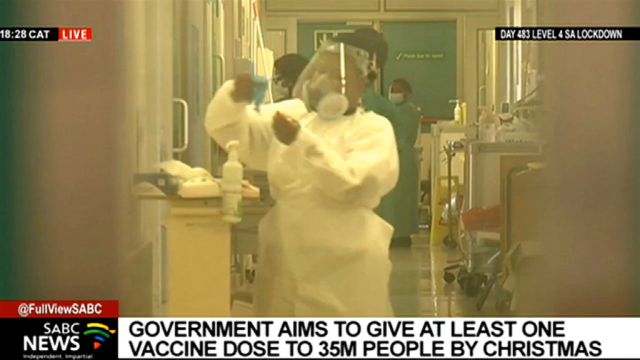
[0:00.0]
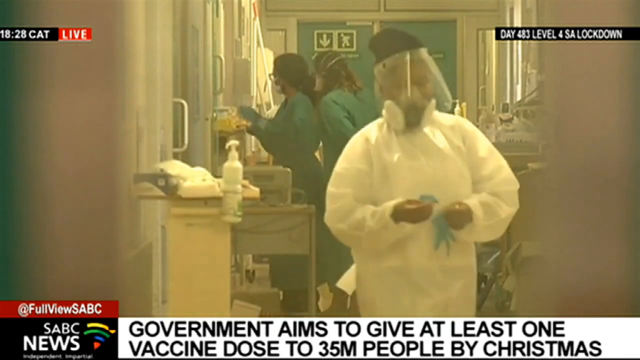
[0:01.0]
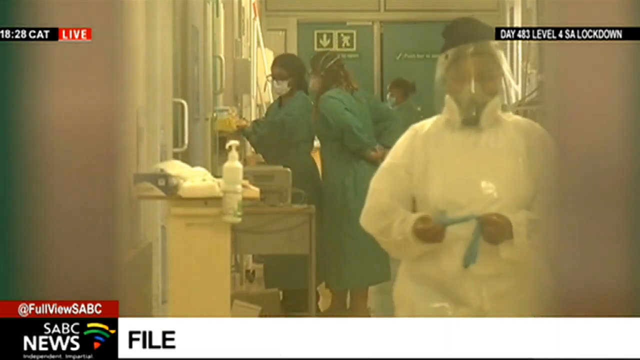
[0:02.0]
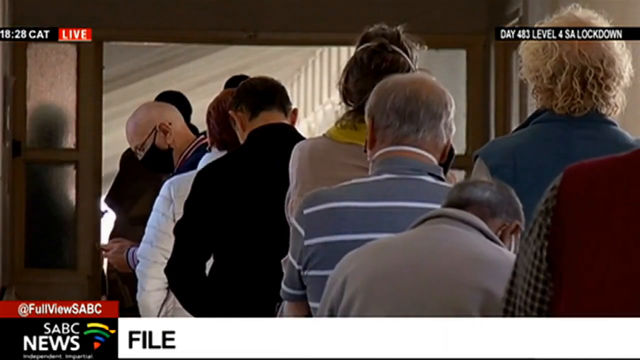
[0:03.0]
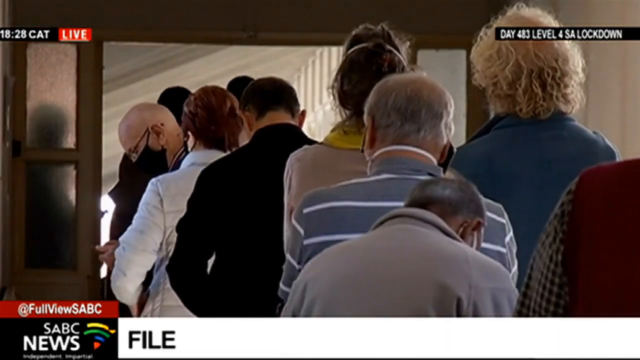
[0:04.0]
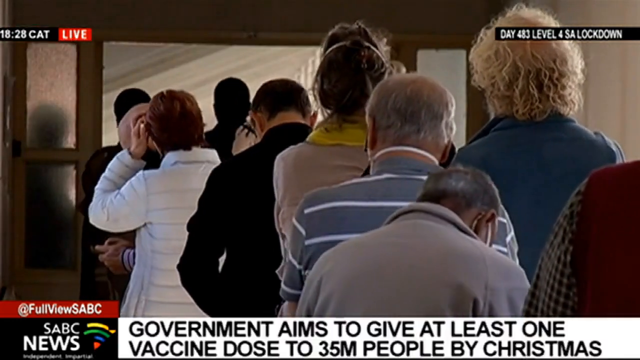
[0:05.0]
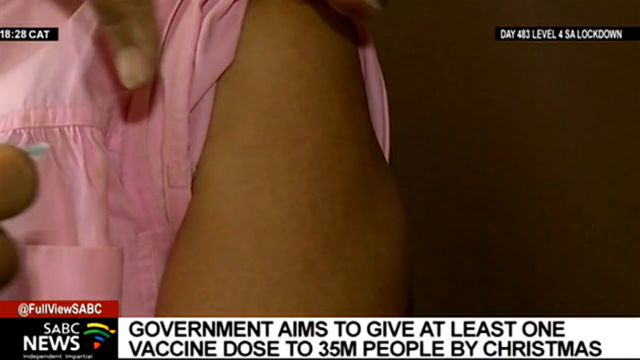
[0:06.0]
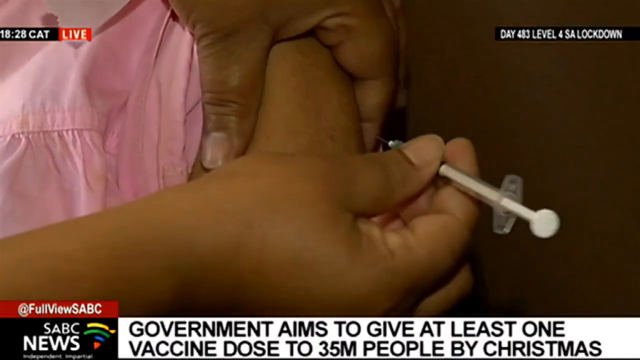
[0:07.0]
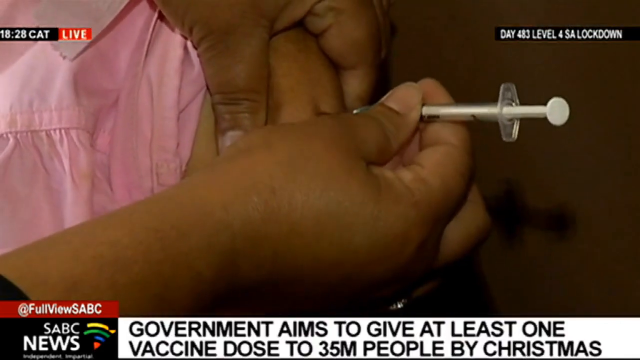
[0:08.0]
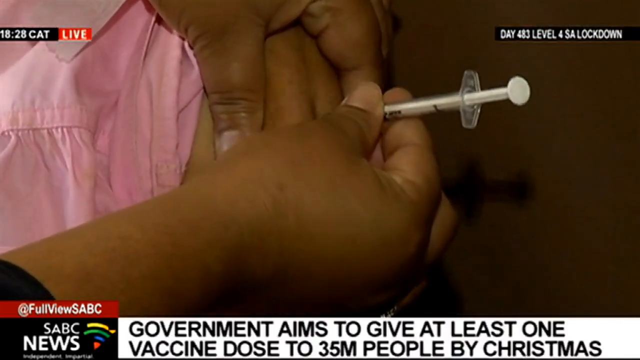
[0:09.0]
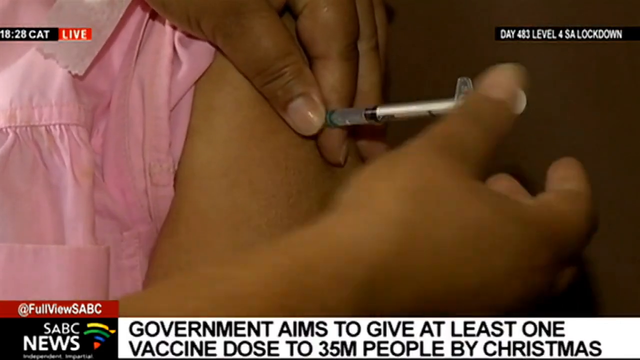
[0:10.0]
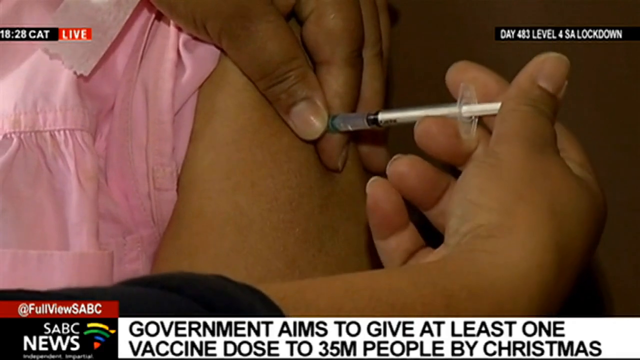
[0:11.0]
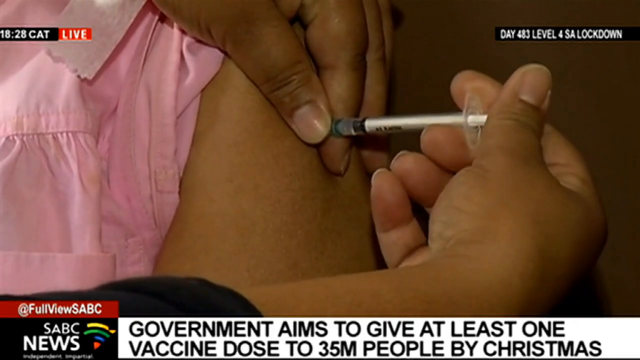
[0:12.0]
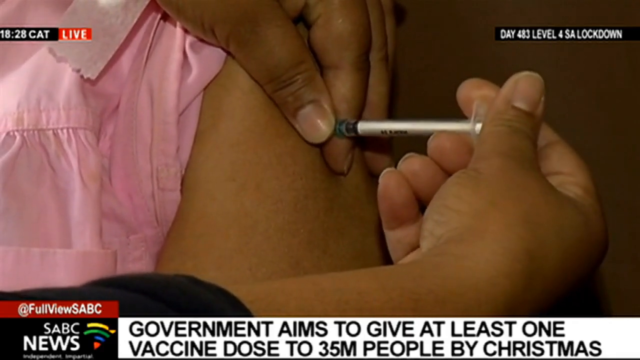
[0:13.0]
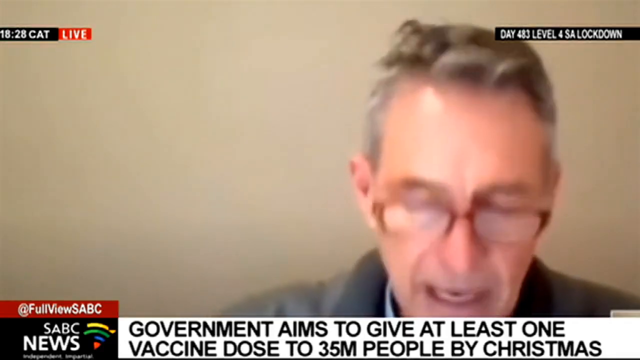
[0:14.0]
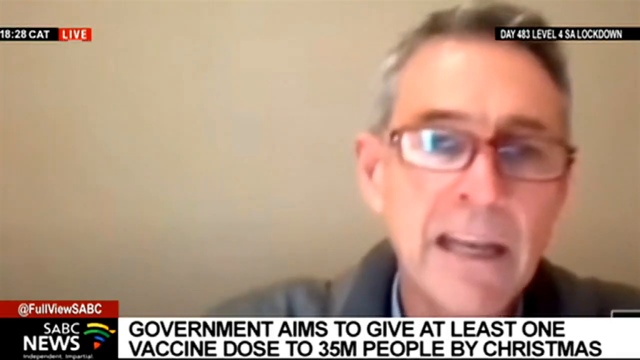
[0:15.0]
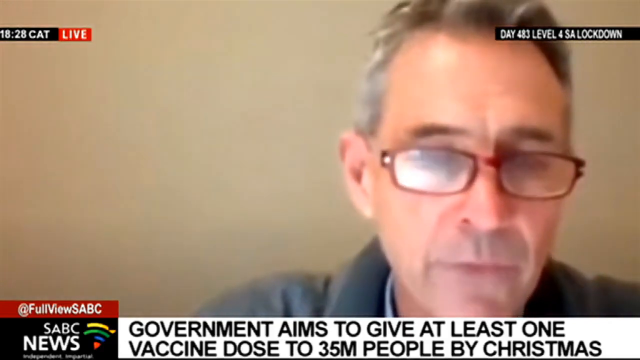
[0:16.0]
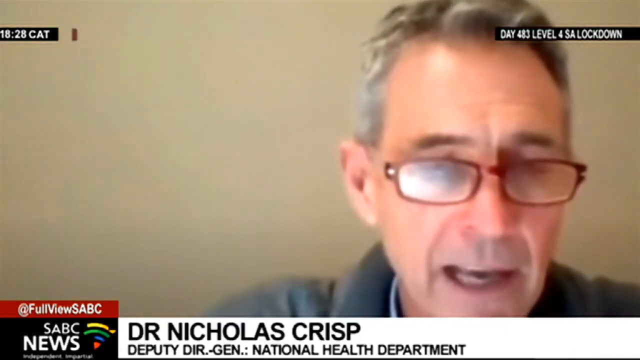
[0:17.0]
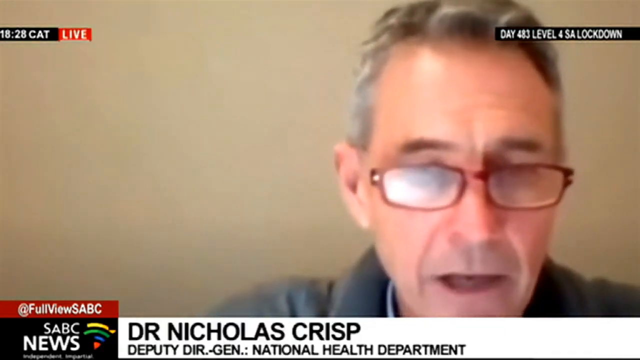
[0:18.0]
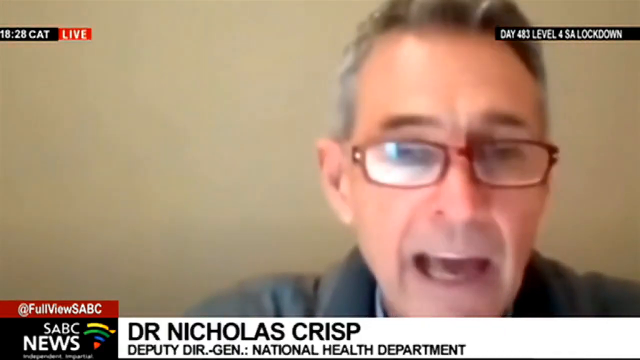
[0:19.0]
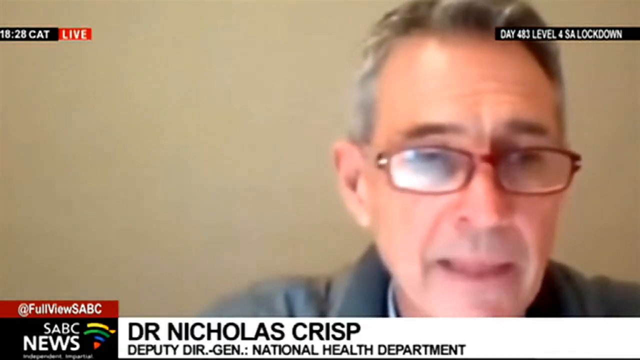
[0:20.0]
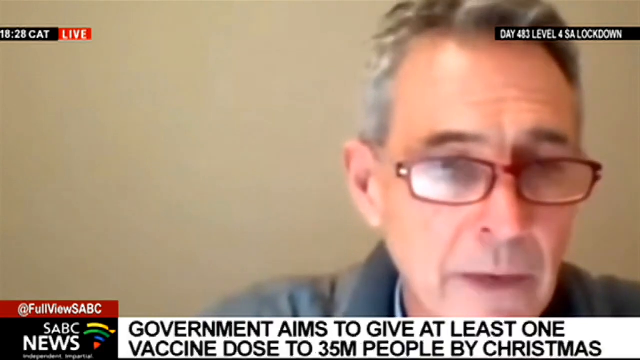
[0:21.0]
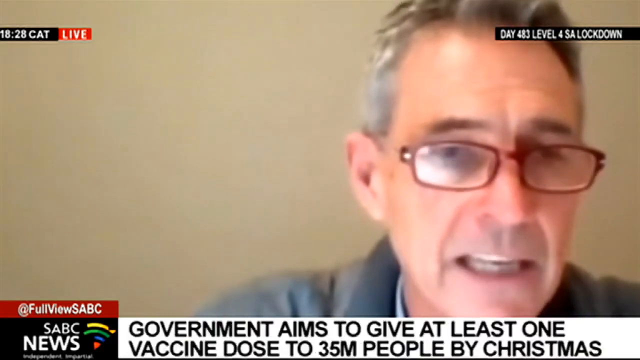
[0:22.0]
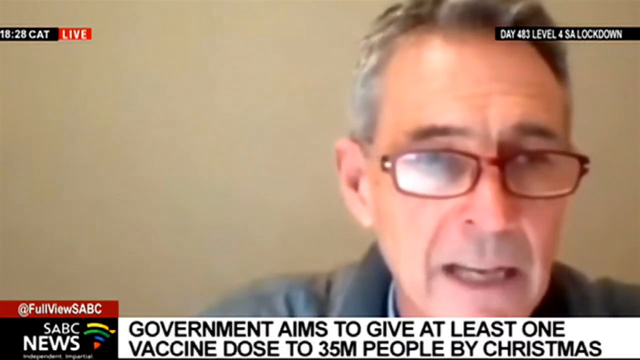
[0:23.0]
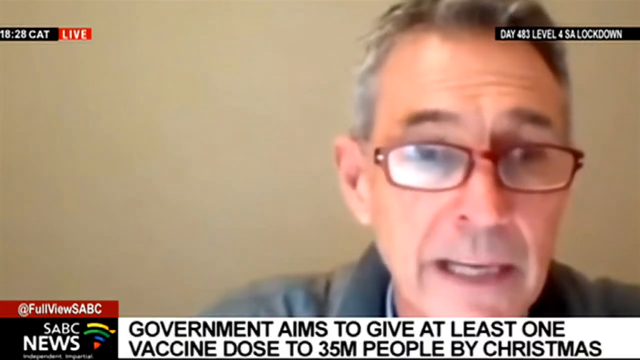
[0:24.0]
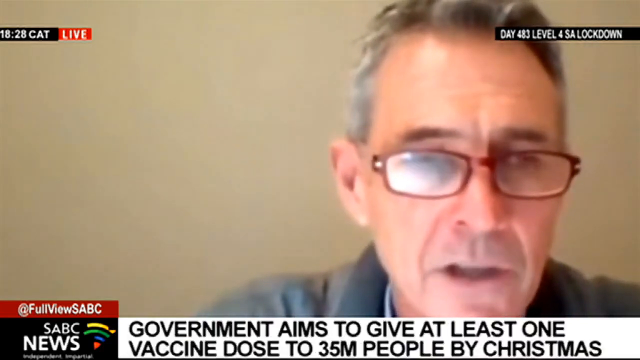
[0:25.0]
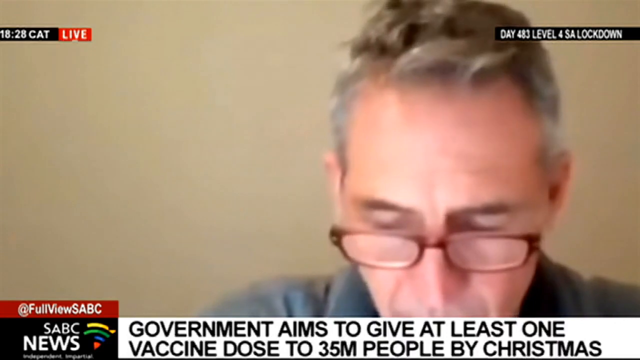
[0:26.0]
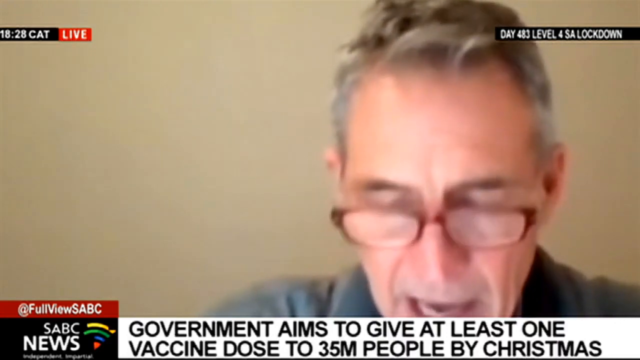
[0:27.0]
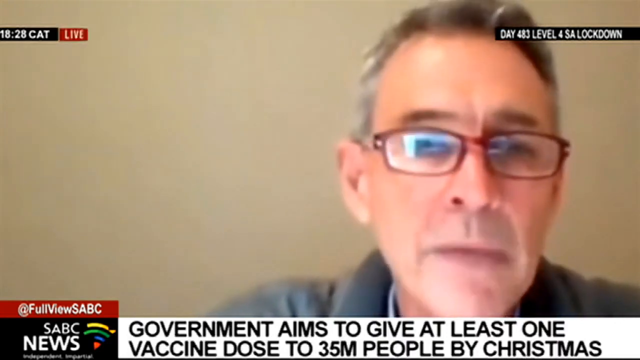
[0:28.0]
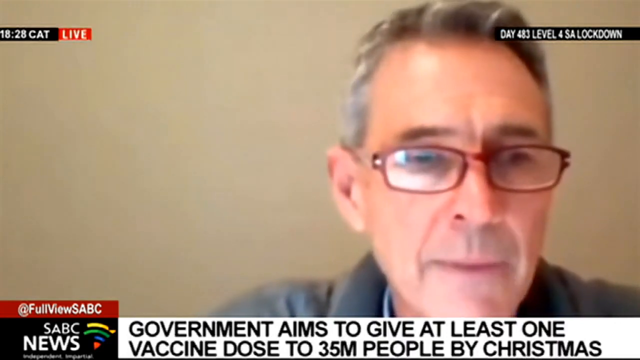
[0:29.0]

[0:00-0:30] A live newscast opens with an on-screen caption stating "the government aims to give at least one vaccine dose to 35 million people by Christmas," most likely referring to the coronavirus. A small black bar in the top right of the screen reads "Day 483 Level 4 SA Lockdown." The footage shows different people in masks working in a medical setting, followed by a line of masked people who seem to be waiting for the vaccine. The caption appears on the screen again and seems to be flashing. Someone is then shown getting the vaccine; the person giving it wears no gloves and seems to be fairly rough with the needle. Next, a man joins the newscast by video, identified as Dr. Nicholas Crisp, deputy director at the National Health Department. A live logo is in the top left of the screen.